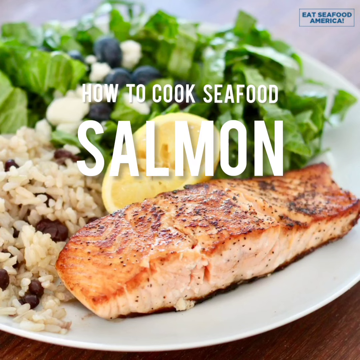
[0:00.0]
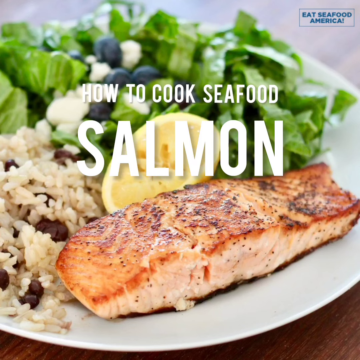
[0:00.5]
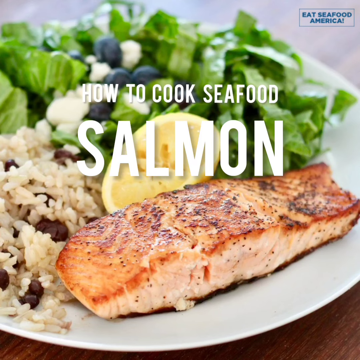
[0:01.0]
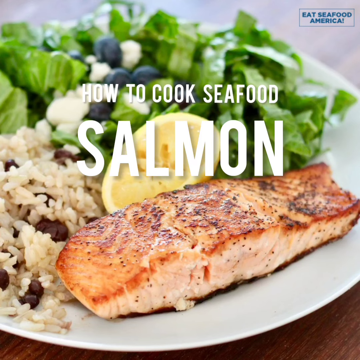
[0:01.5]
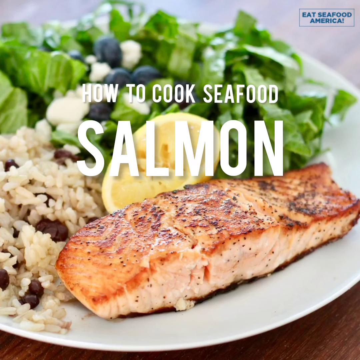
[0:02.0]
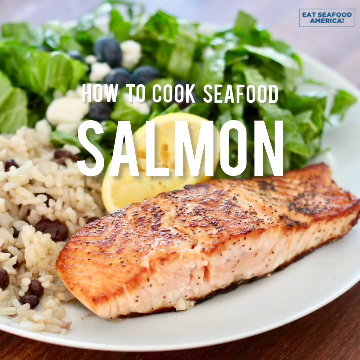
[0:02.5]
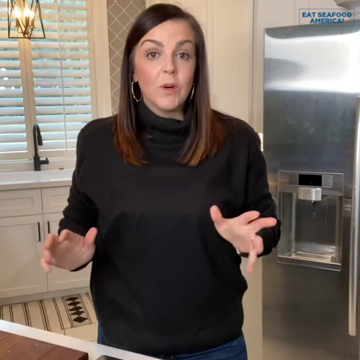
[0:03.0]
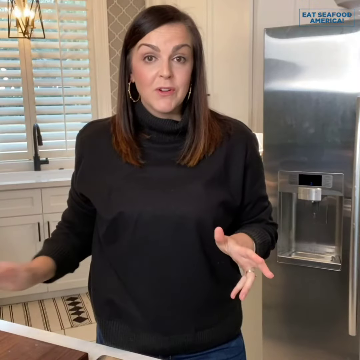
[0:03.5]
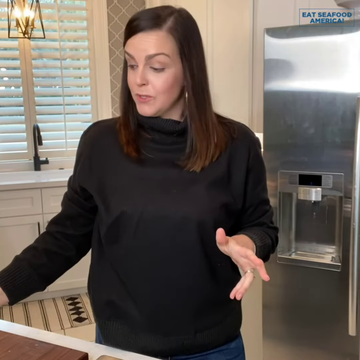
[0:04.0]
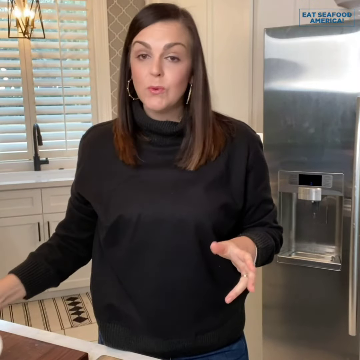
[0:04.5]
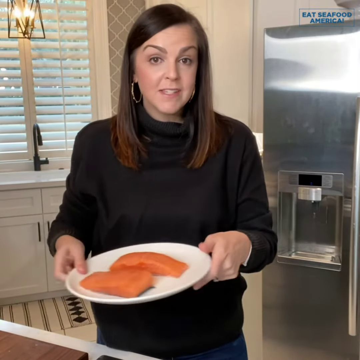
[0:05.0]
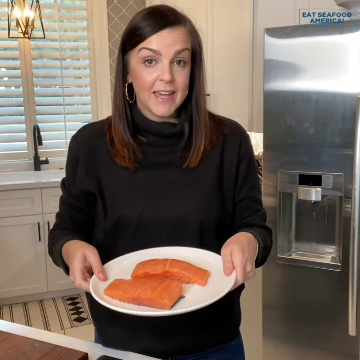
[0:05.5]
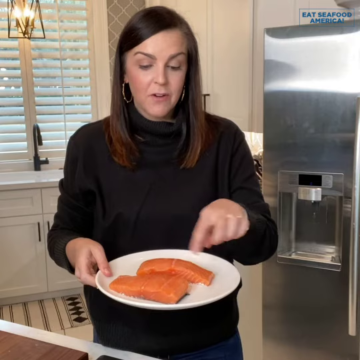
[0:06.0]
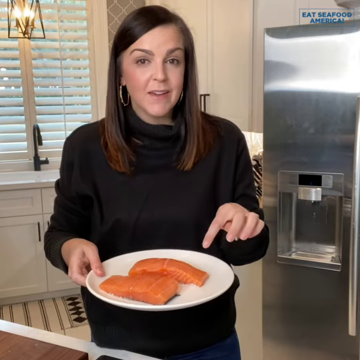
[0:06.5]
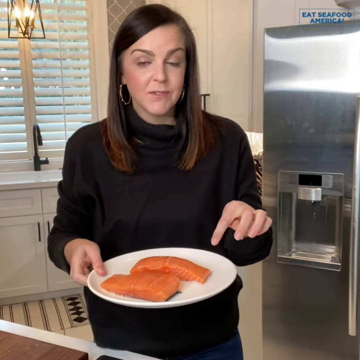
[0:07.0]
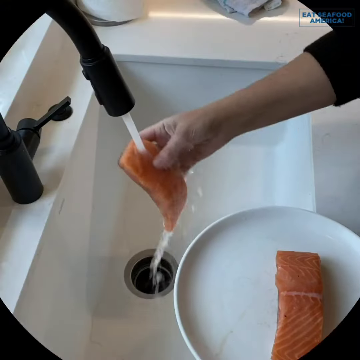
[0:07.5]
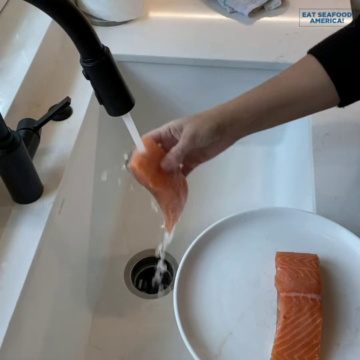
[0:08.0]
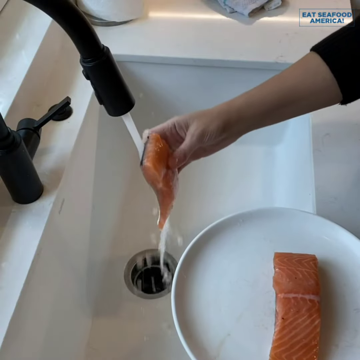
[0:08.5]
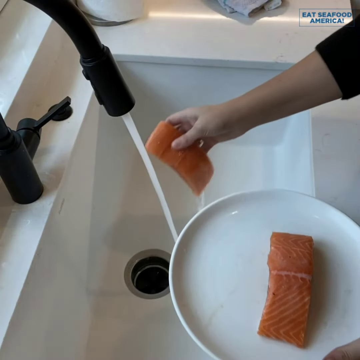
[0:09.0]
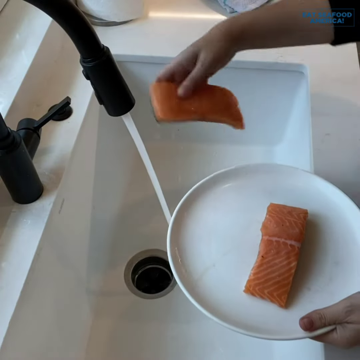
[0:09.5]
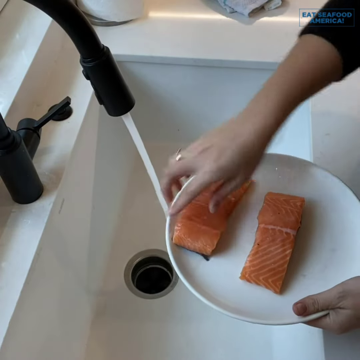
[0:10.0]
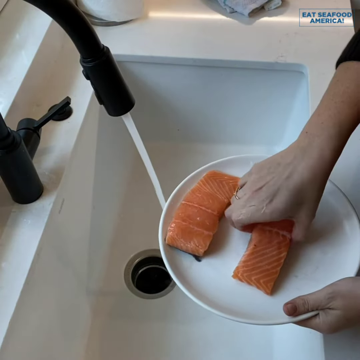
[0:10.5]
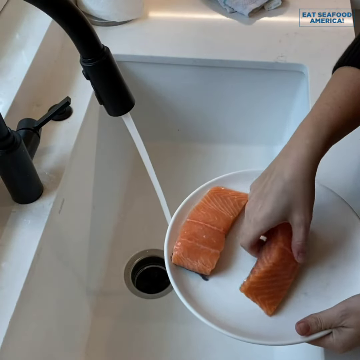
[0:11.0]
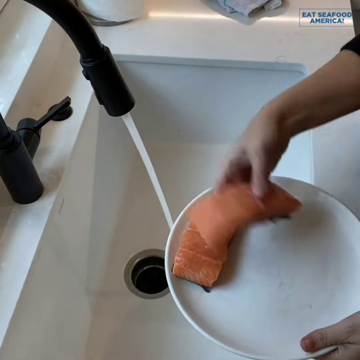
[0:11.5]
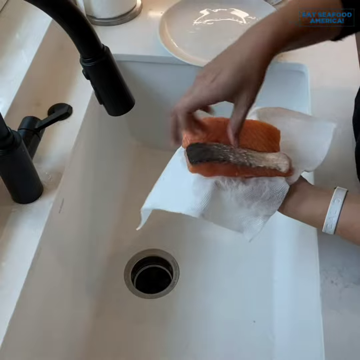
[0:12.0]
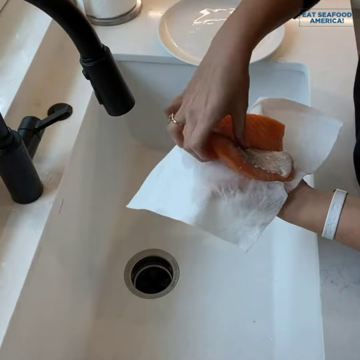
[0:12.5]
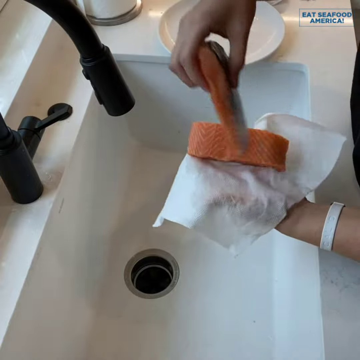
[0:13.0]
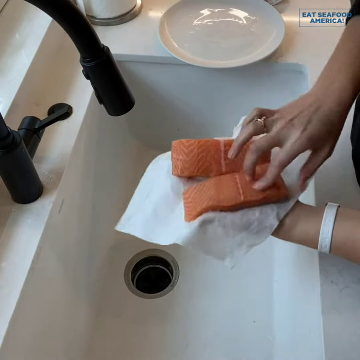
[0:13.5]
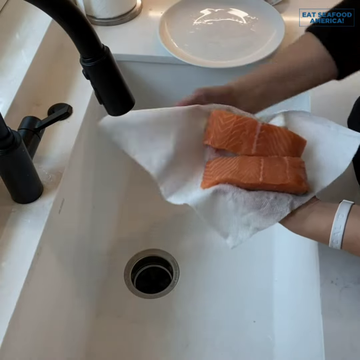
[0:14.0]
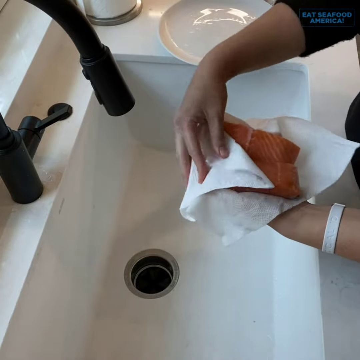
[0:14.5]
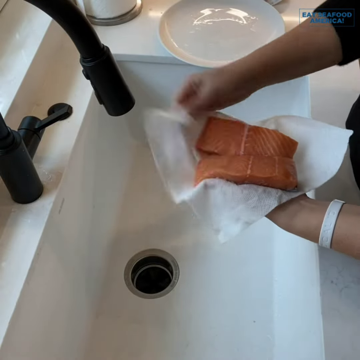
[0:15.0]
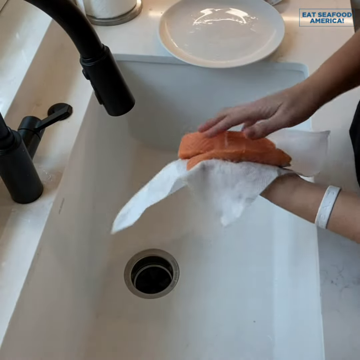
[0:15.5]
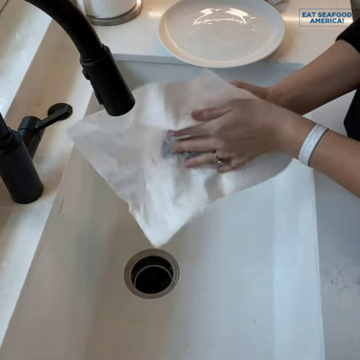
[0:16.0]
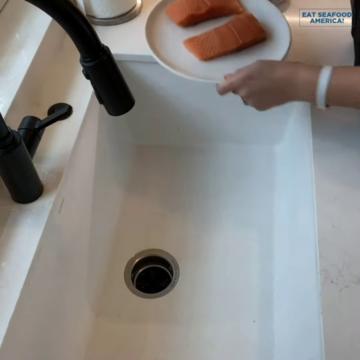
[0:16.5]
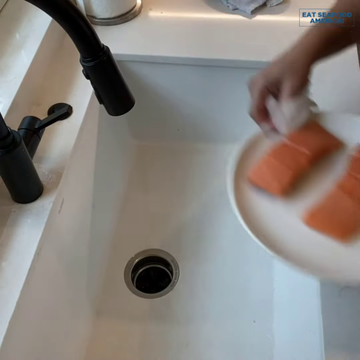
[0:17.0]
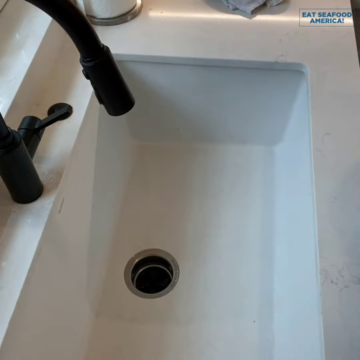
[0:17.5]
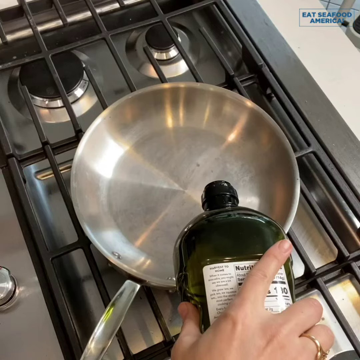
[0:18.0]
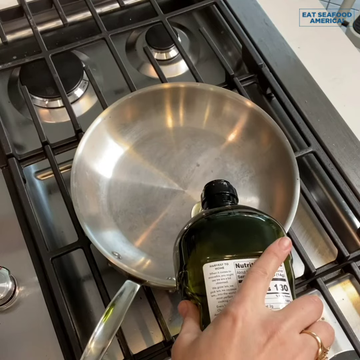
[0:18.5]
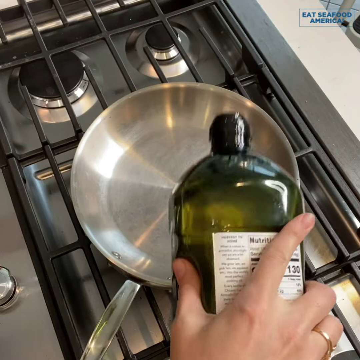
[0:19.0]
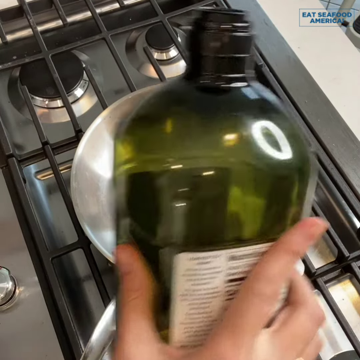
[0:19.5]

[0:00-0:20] The on-screen text reads "how to cook seafood." A woman with long hair, wearing a black shirt, acts as the guide; she appears to be in a kitchen, with a fridge on her left-hand side. She speaks and gestures with her hands, and in her right hand she carries a white plate holding raw seafood. She takes it to the kitchen sink and washes the pieces one after the other, first one and then the second, before placing them back on a plate and pouring water.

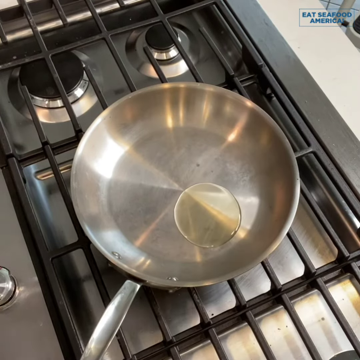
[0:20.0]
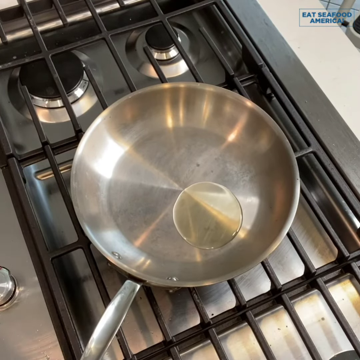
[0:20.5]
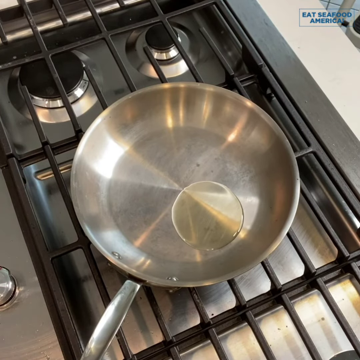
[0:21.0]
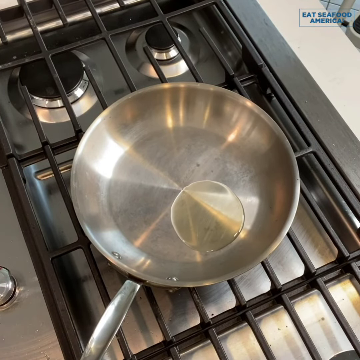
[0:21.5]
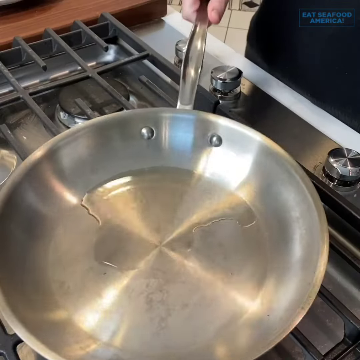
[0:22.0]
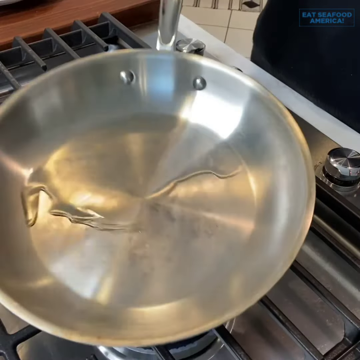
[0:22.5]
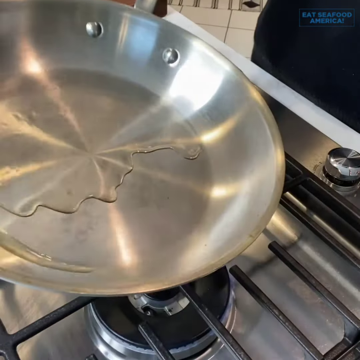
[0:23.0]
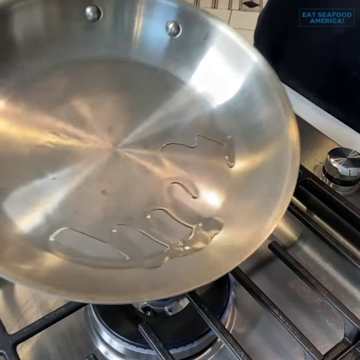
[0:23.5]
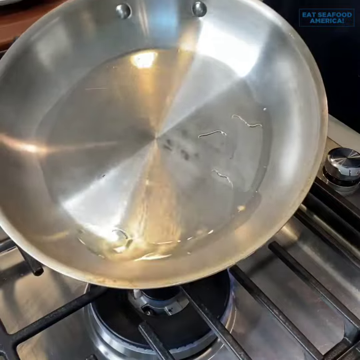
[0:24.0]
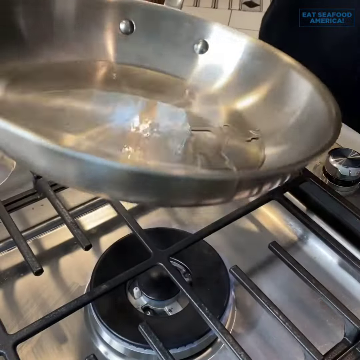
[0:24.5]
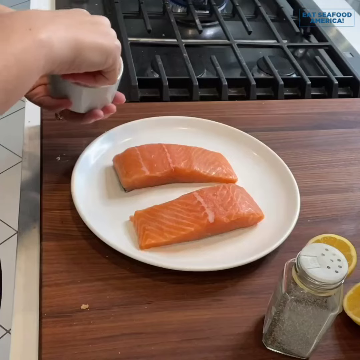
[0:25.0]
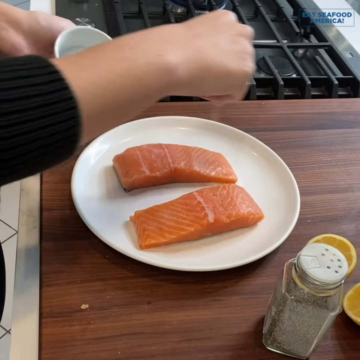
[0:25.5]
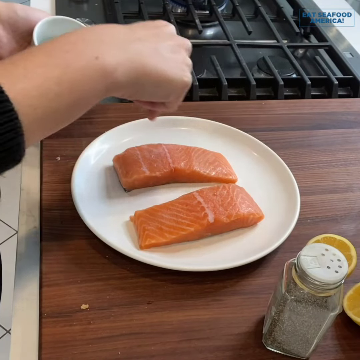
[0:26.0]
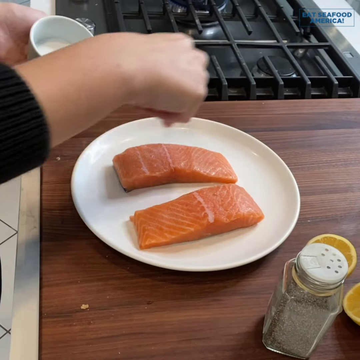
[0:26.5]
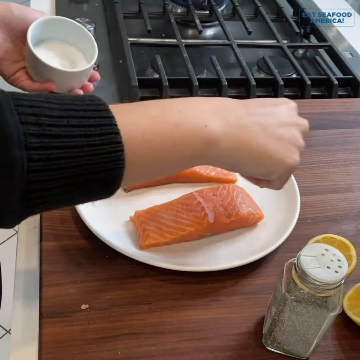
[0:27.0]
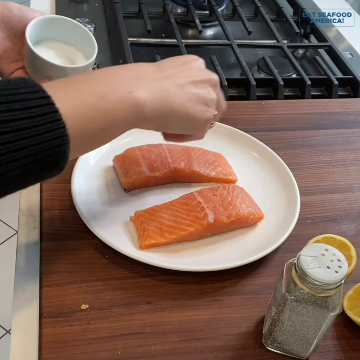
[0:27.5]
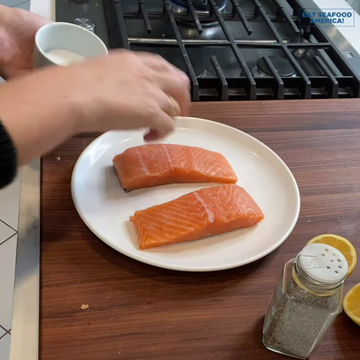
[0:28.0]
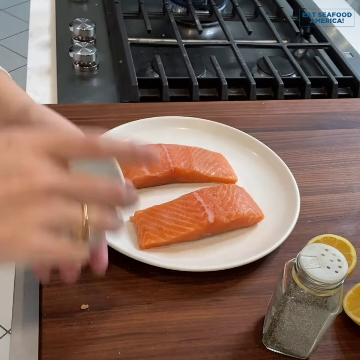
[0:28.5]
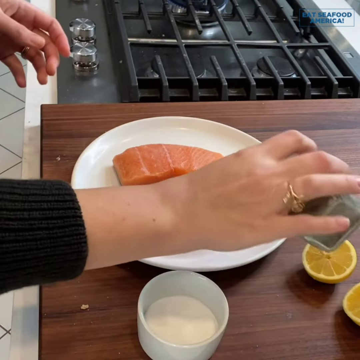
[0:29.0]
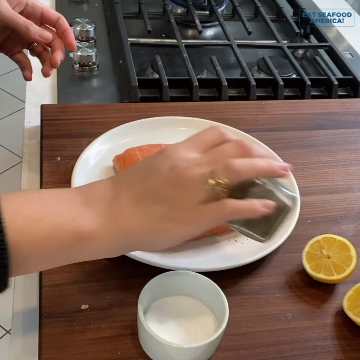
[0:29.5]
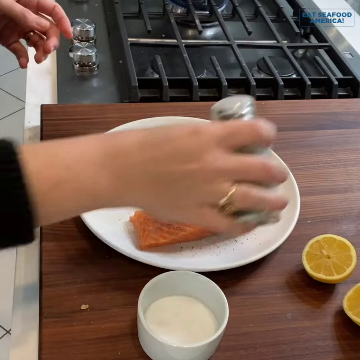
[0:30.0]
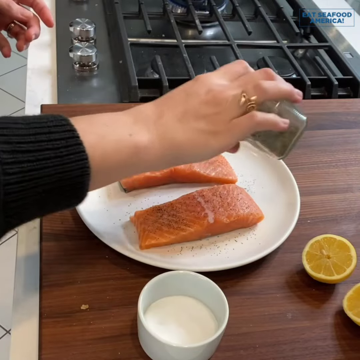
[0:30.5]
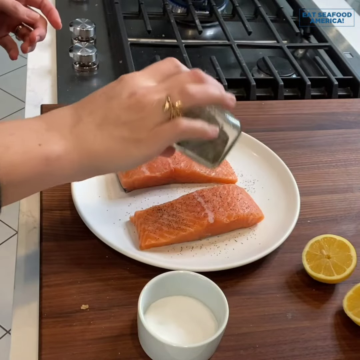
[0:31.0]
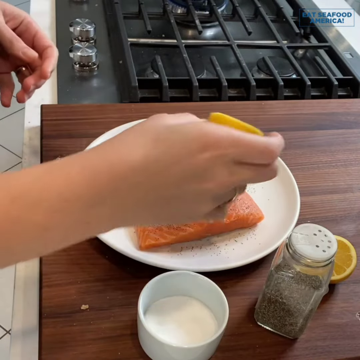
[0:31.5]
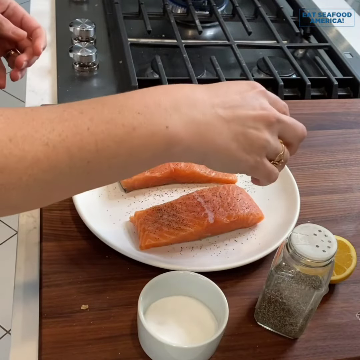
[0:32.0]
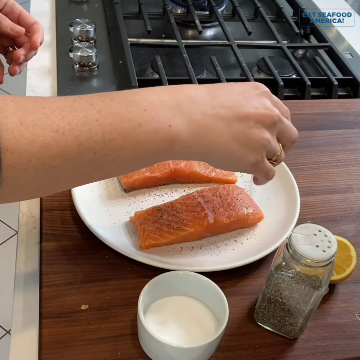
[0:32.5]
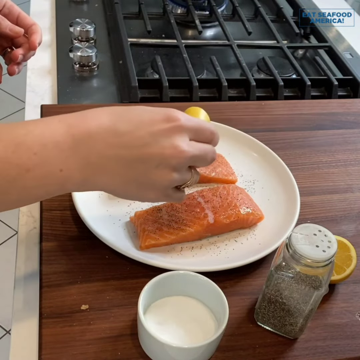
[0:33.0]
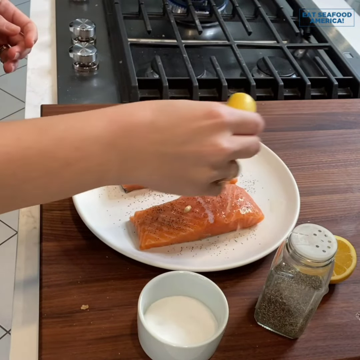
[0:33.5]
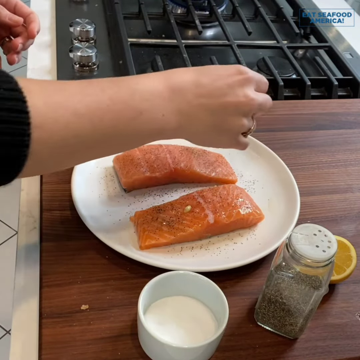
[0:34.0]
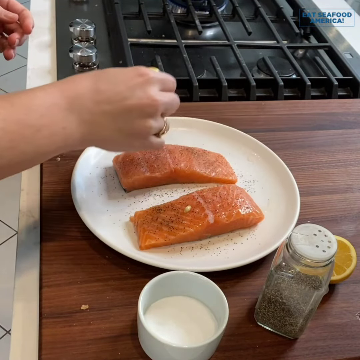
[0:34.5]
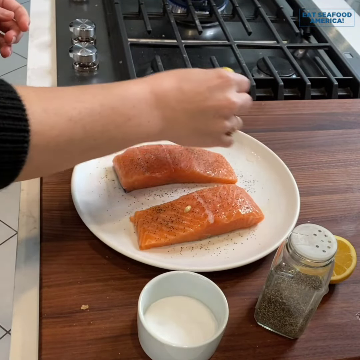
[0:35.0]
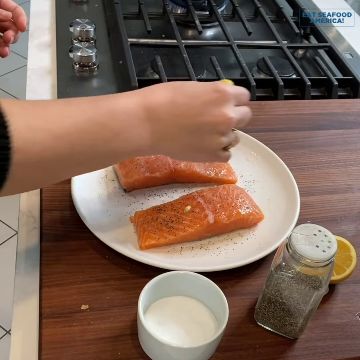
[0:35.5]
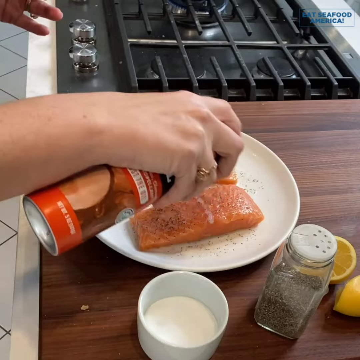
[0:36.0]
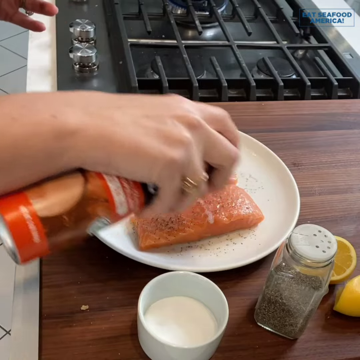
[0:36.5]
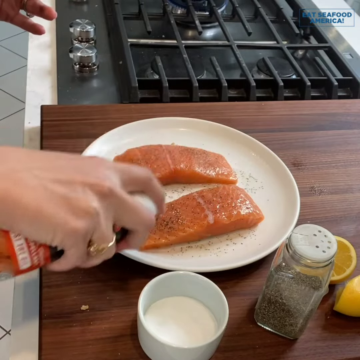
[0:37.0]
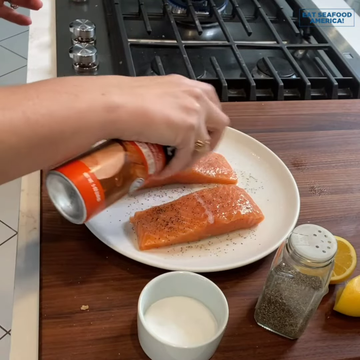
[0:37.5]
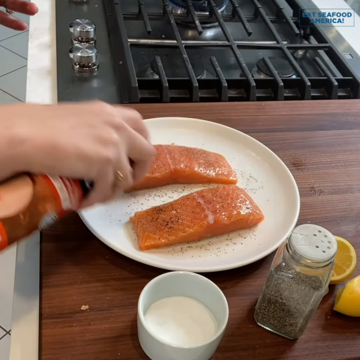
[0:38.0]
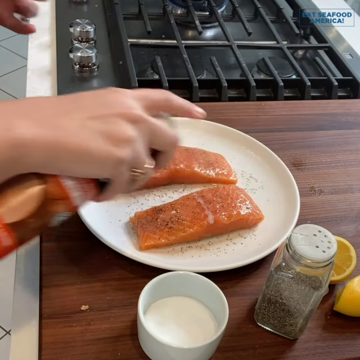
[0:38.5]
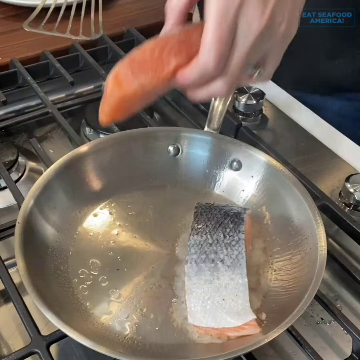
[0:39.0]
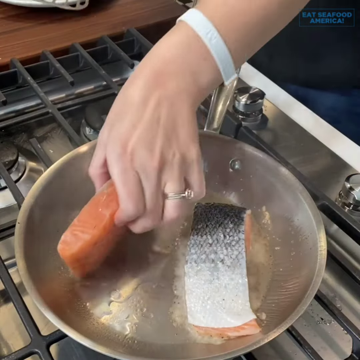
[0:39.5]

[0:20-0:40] A stainless frying pan with a handle is placed on what looks like a gas stove with several burners. A small quantity of oil is put into the pan, and the pan is shaken so the oil reaches the other side. The salmon lies on a flat white plate, and salt is applied to it: a person holds the salt in her left hand and dips her hand into it to rub it onto the body of the salmon. Curry is then added, followed by lime, and oil is sprinkled on it. The salmon is then placed gently in the pan on the burner for frying.